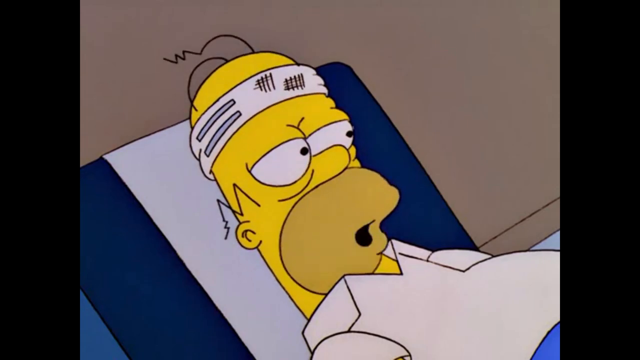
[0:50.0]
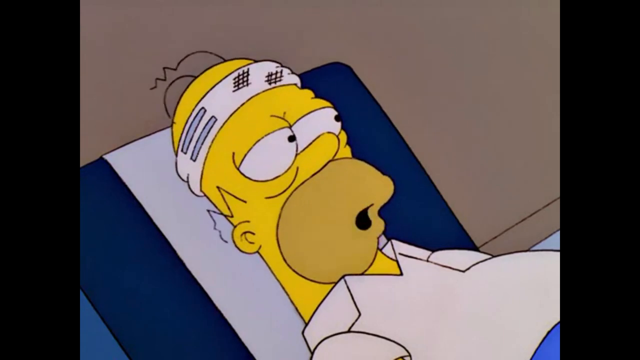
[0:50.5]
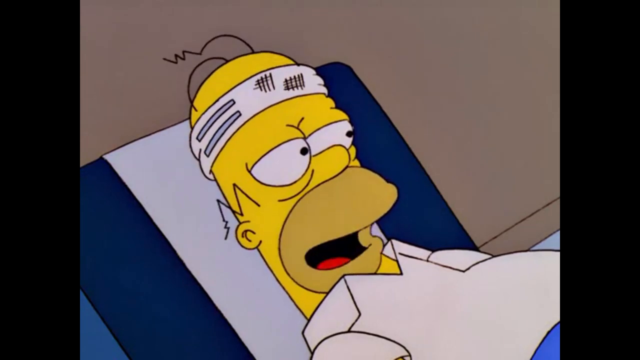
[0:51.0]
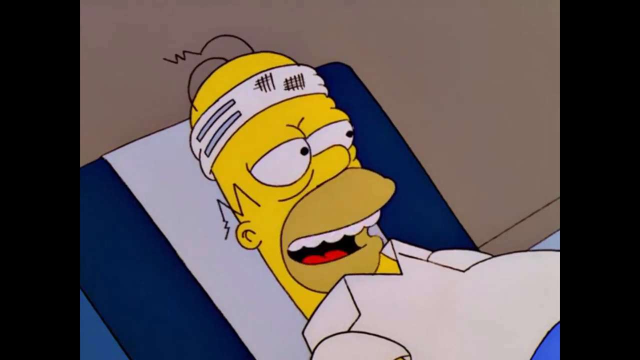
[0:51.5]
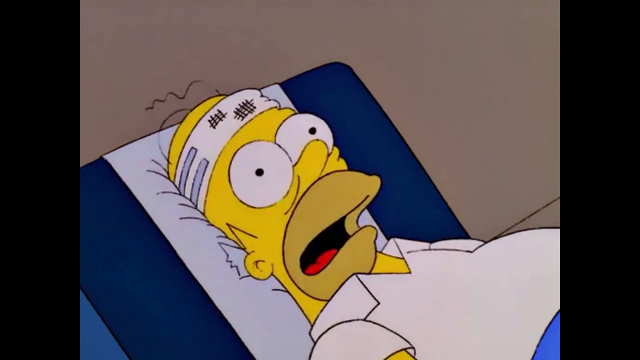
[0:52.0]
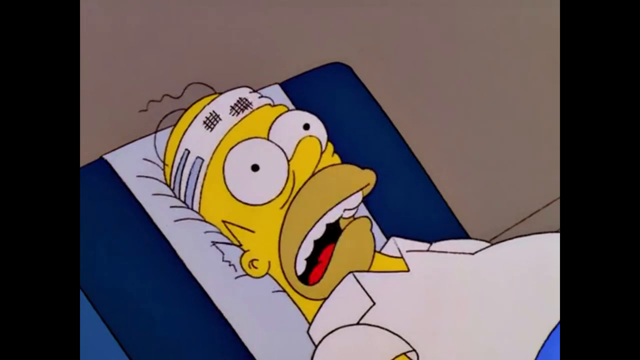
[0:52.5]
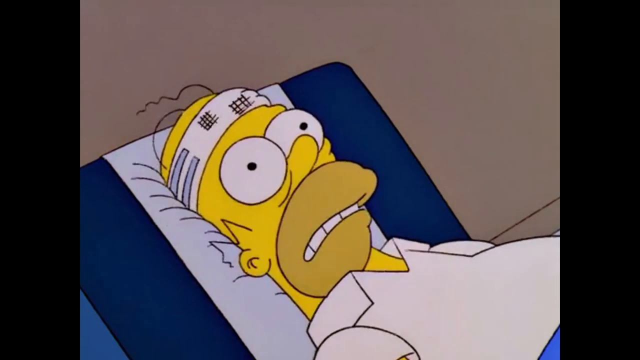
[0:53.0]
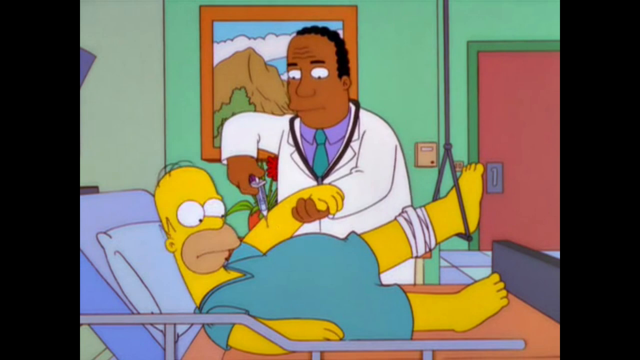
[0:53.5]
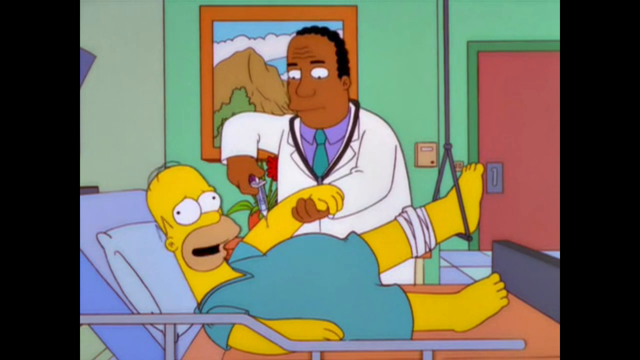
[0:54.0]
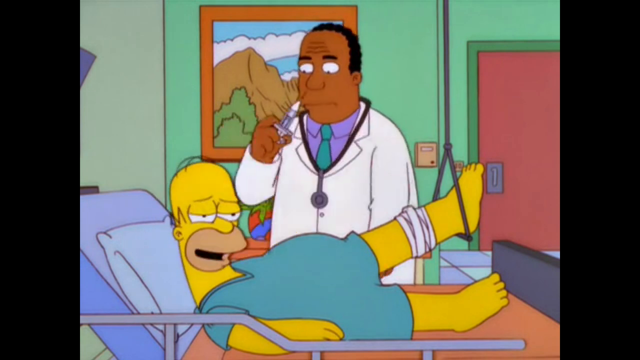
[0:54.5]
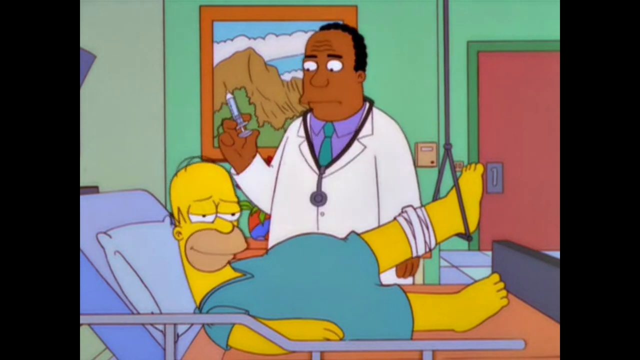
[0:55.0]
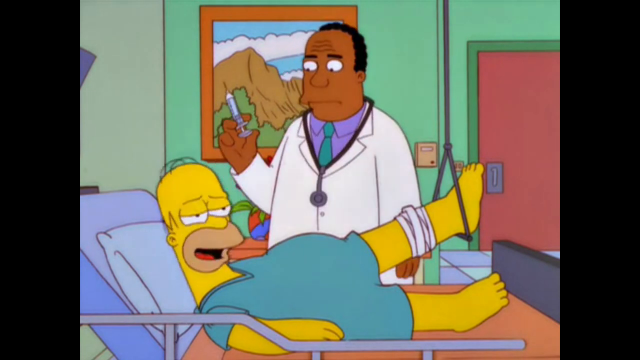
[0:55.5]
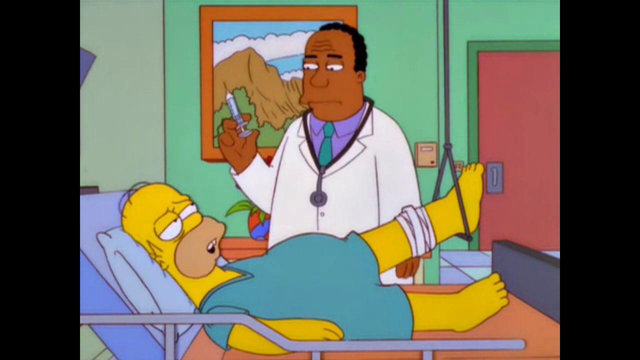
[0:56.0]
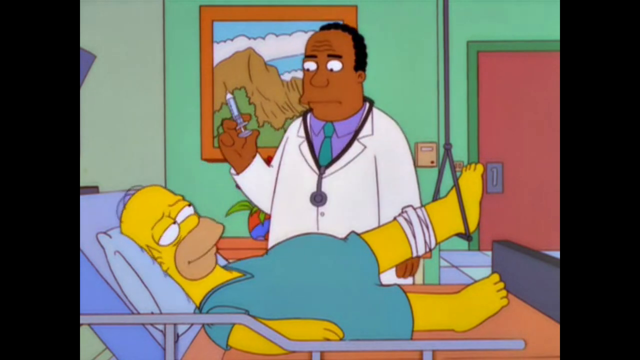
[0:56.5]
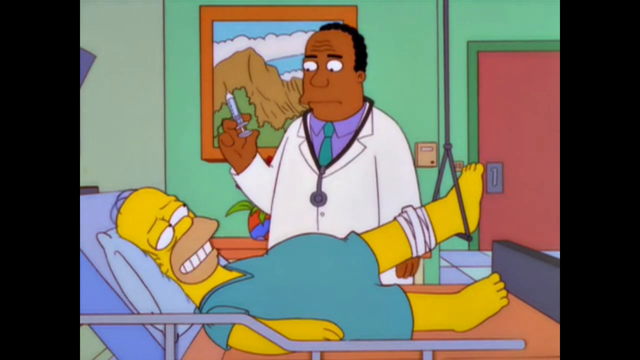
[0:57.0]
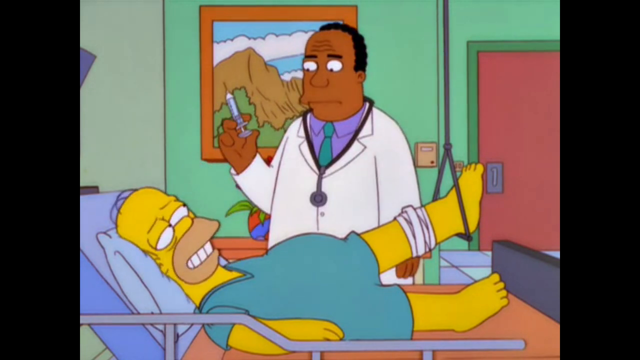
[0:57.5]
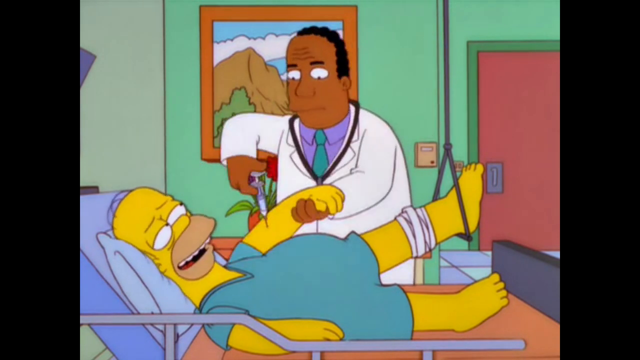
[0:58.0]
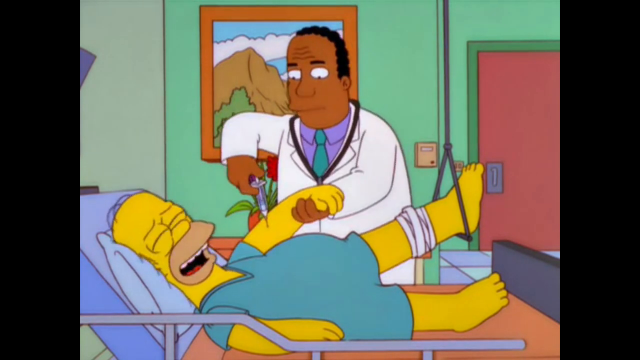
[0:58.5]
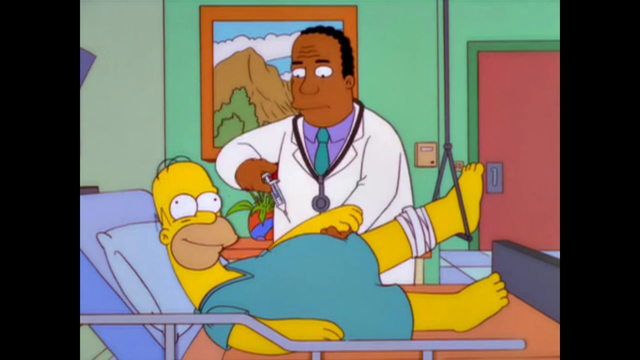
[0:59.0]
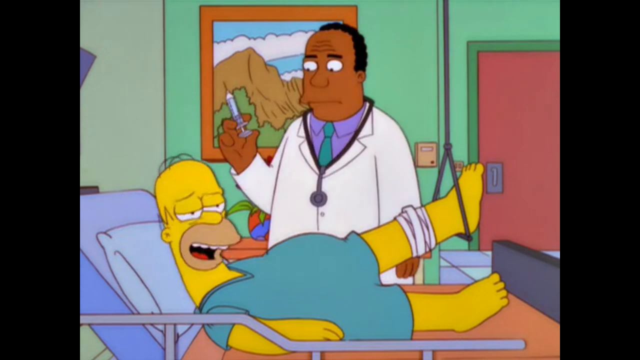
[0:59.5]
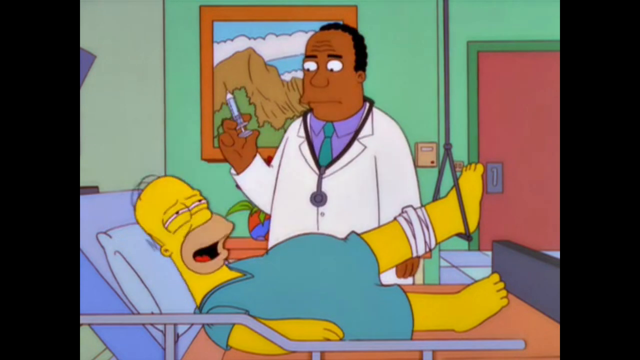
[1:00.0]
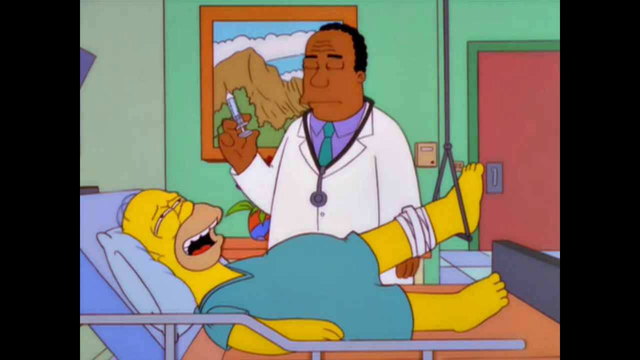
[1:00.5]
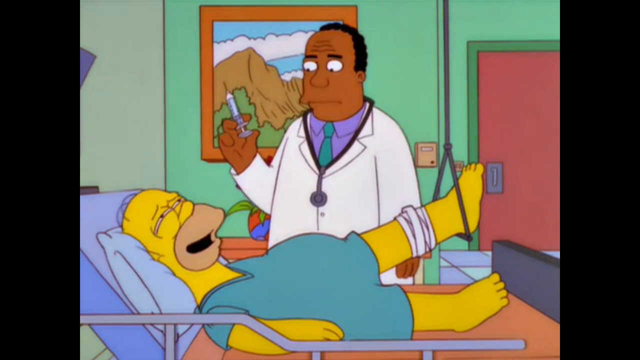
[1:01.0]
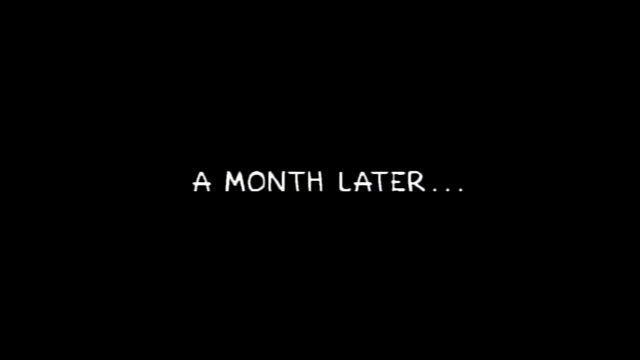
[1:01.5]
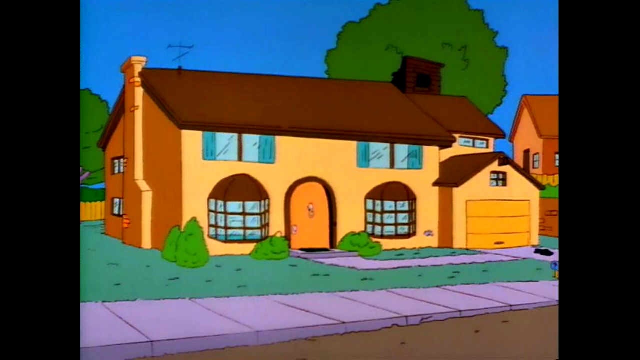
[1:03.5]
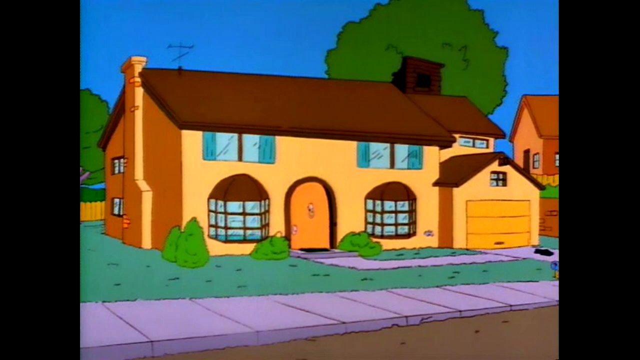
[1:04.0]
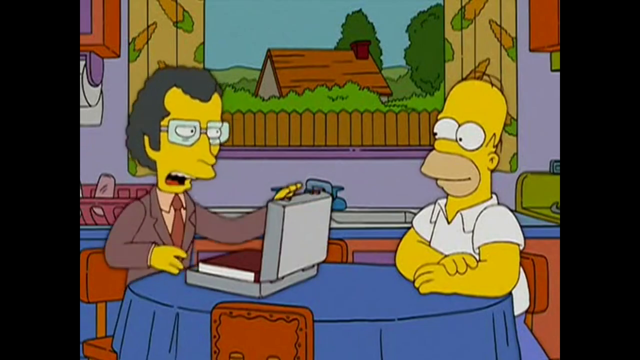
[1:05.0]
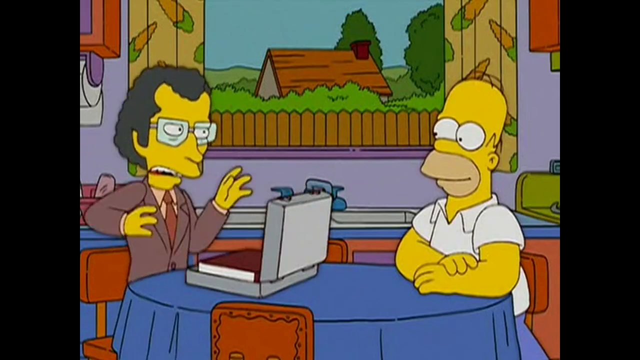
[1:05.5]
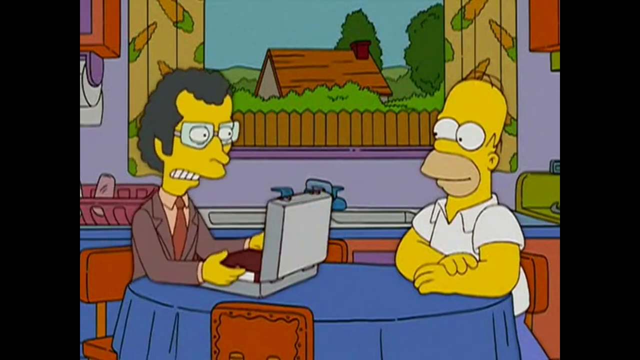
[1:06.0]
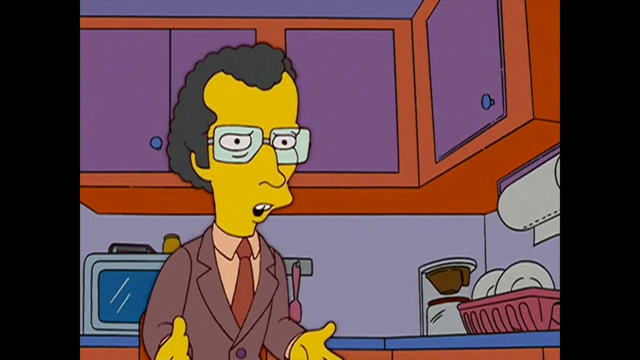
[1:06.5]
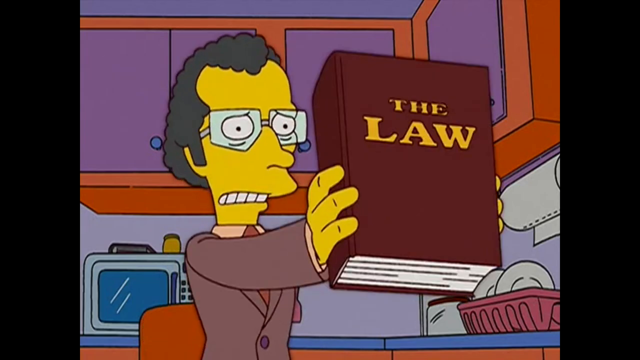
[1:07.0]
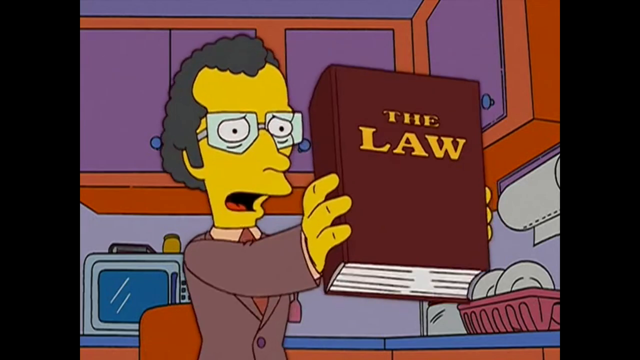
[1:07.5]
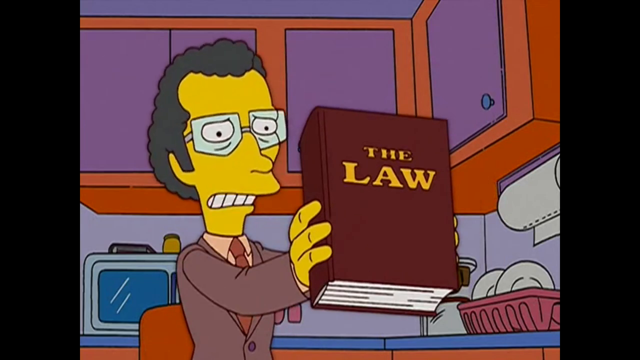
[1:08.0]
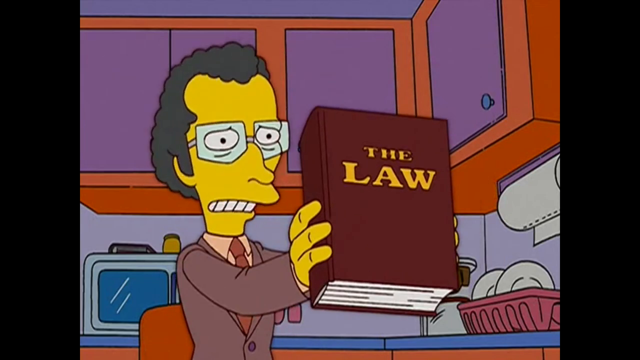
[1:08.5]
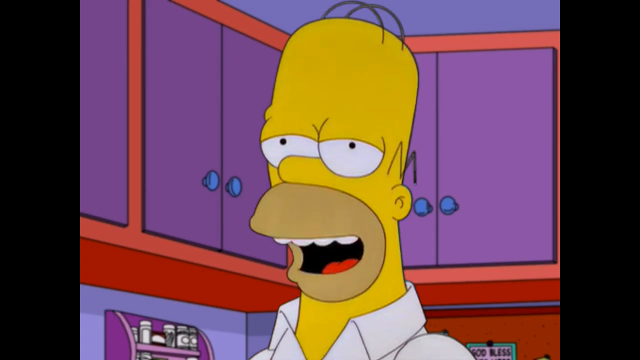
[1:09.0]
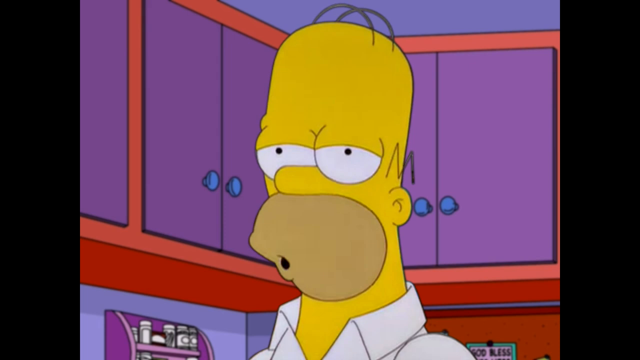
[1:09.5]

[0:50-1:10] A close-up shows Homer's head facing upward, with a white bandage wrapped around the top, two hairs sticking up and an M of hair on the side of his head. Where his head lies is light blue, with dark blue on the left and right and a gray wall. He still wears his white shirt. He looks up to the right, talking and moving his head up and down a little. He then slams his head back into the bed and starts shaking violently. The scene cuts to the doctor putting a needle in his arm; Homer's left leg hangs from one of the triangles. His eyes look kind of googly, and then he looks really relaxed. As the doctor takes the needle out, Homer lays his head back on a pillow looking up at him. The doctor stands there with a needle in his hand, Homer talks some more, and the doctor shoves the needle in his arm again. Homer starts to look really happy and laid back. A black screen appears with white text saying "a month later". A shot shows the house from the outside, then inside, where a lawyer on the left opens a silver briefcase and Homer is on the right; they sit at the kitchen table. A close-up shows the lawyer, who has curly gray hair, a purple suit and glasses, shoving forward a big burgundy book that says "the law" in yellow as he keeps talking. The scene cuts to Homer talking, with purple cabinets with an orange border behind him, and the camera zooms in on his forehead.